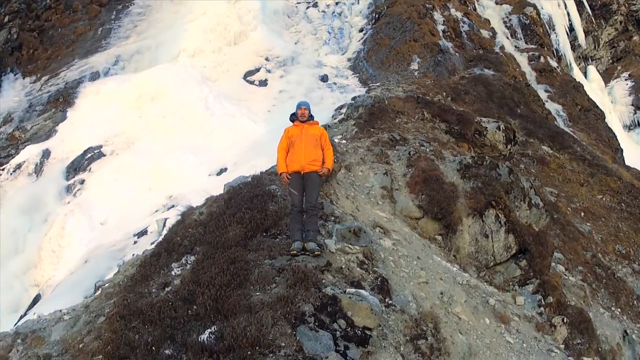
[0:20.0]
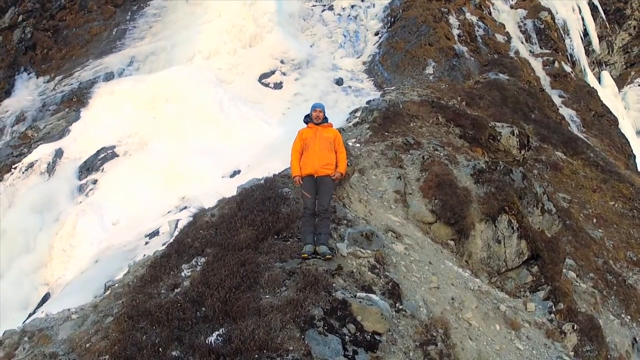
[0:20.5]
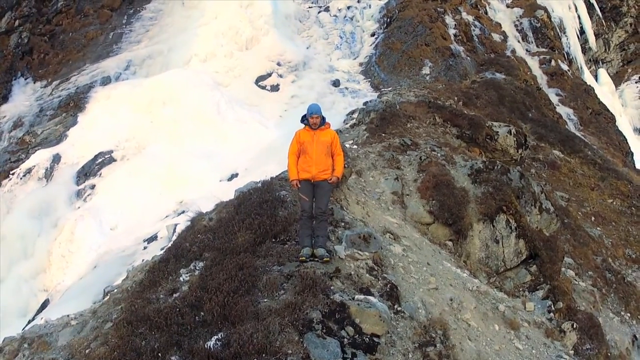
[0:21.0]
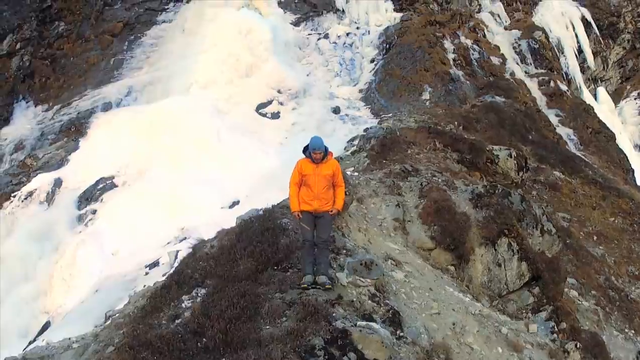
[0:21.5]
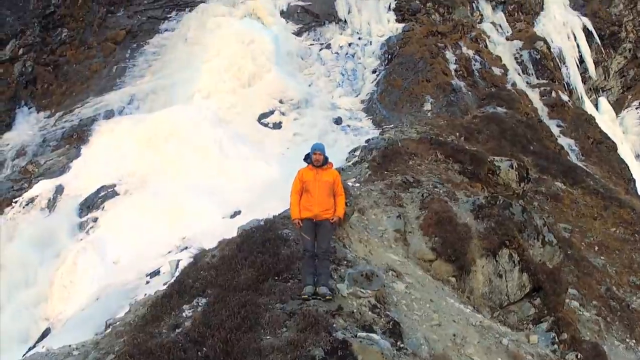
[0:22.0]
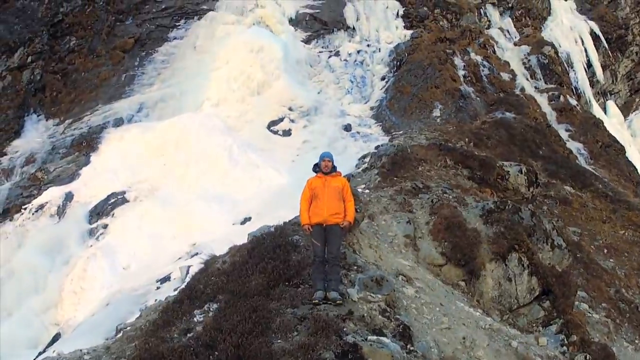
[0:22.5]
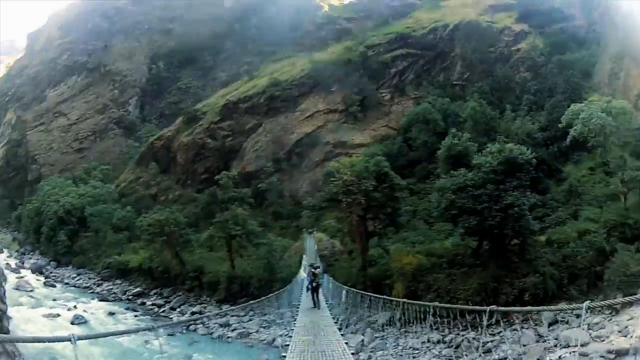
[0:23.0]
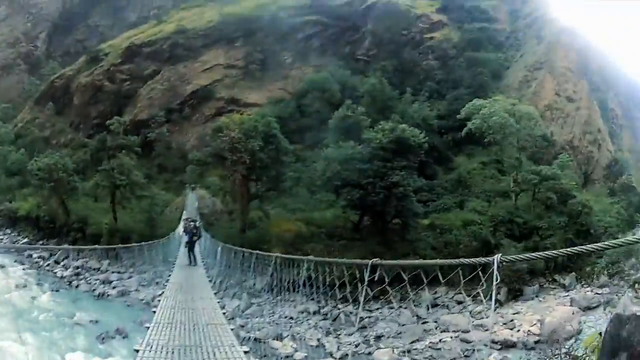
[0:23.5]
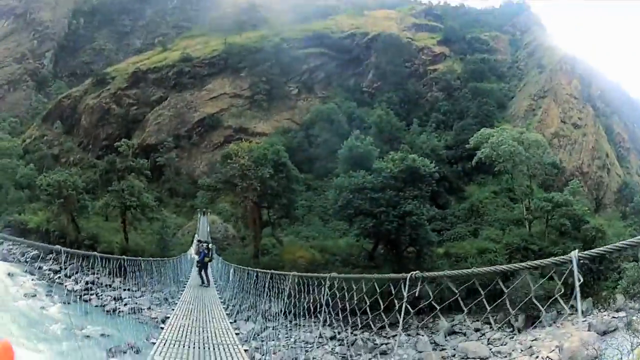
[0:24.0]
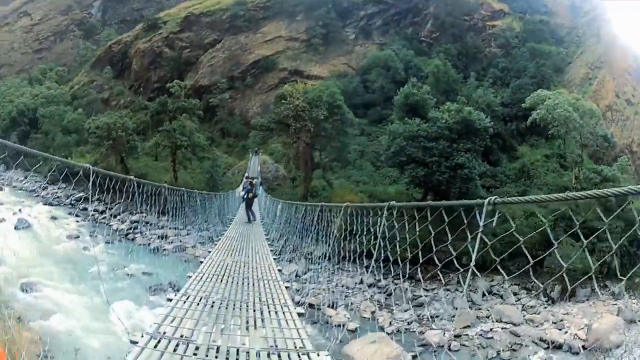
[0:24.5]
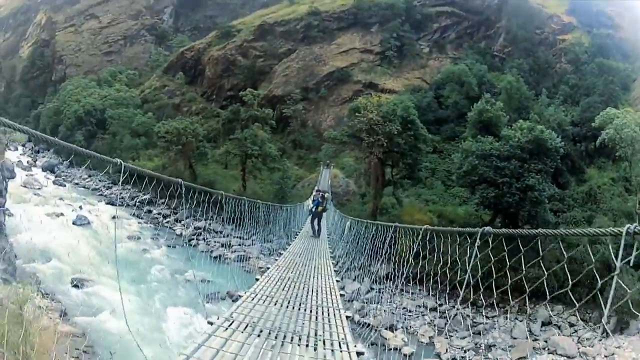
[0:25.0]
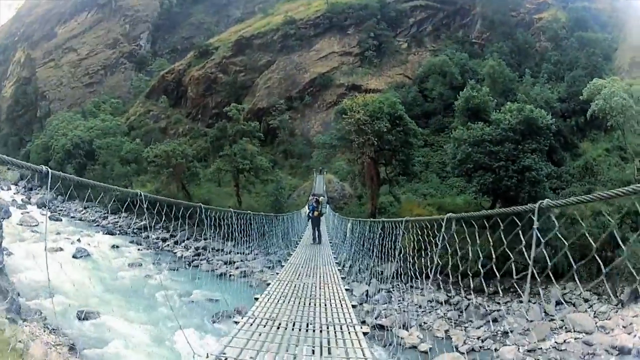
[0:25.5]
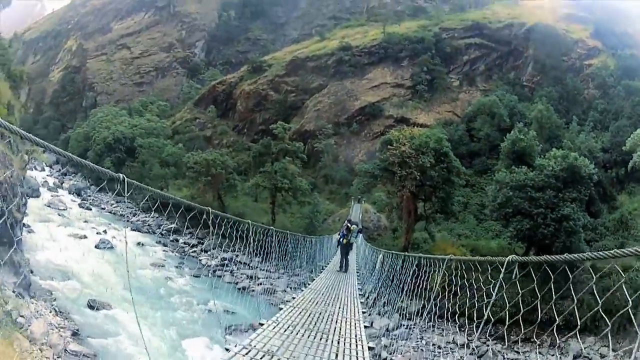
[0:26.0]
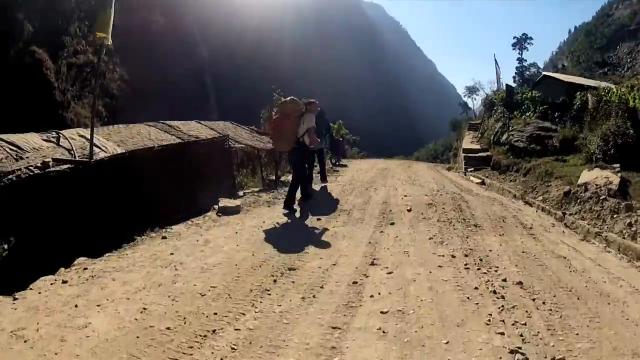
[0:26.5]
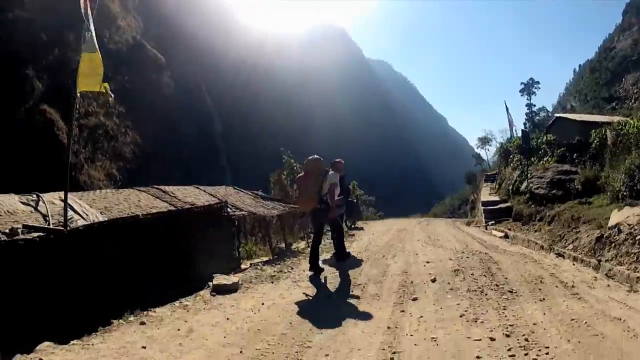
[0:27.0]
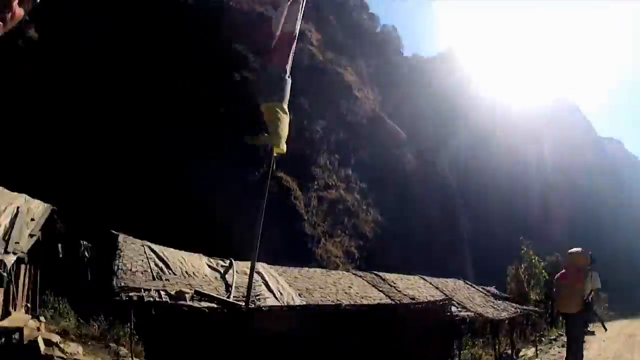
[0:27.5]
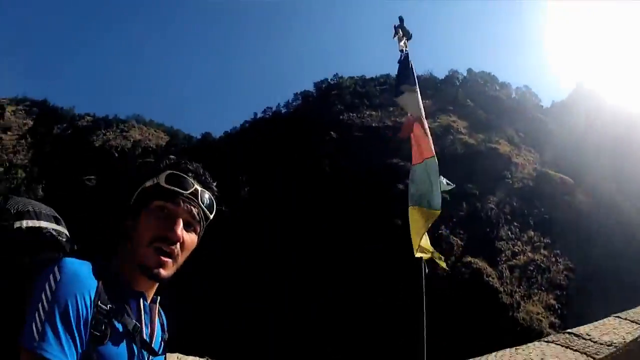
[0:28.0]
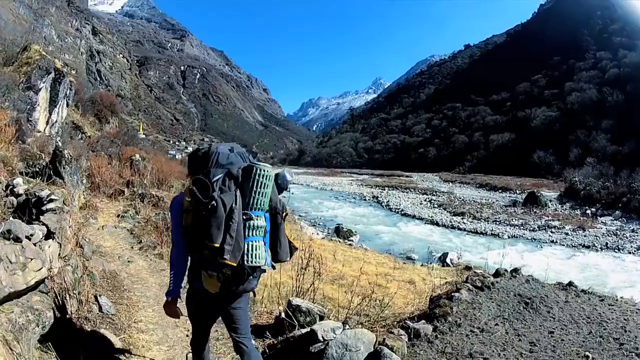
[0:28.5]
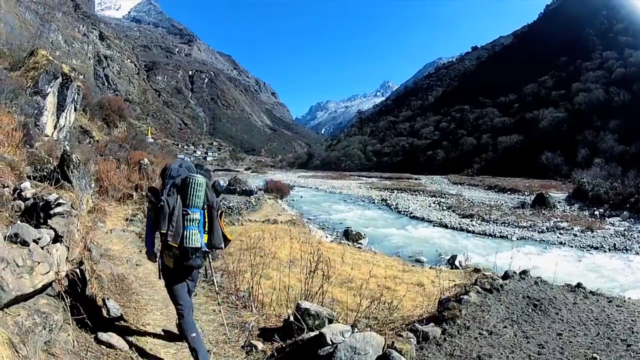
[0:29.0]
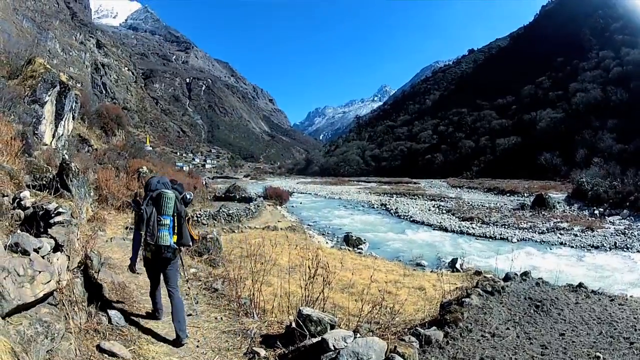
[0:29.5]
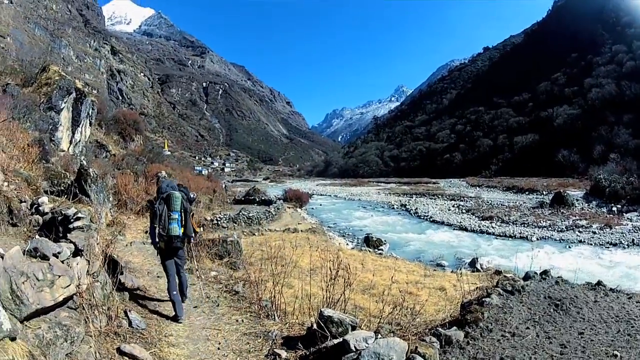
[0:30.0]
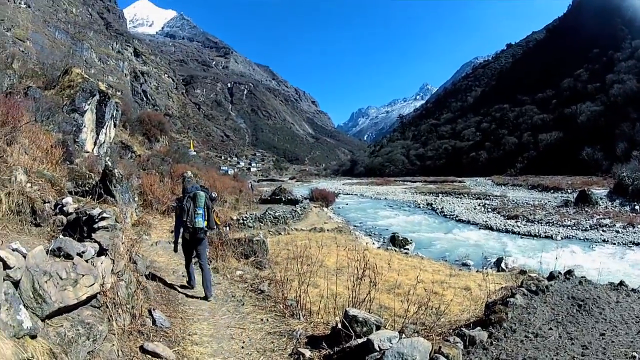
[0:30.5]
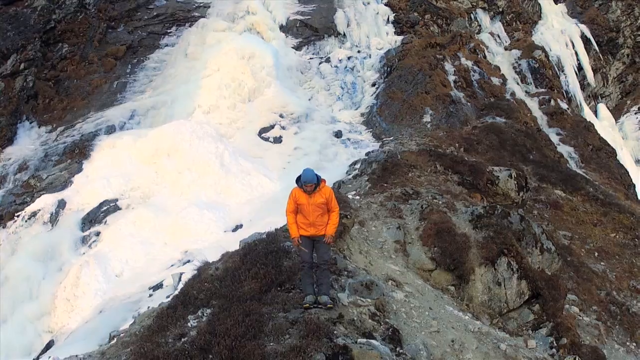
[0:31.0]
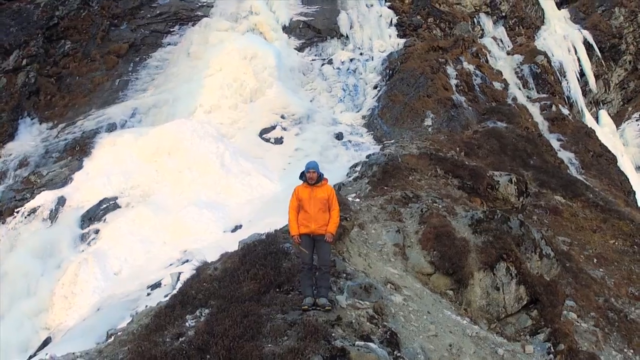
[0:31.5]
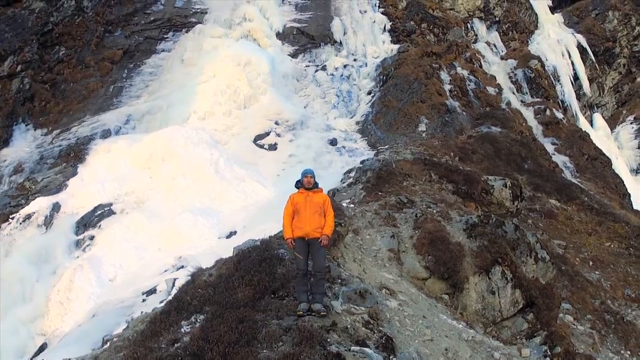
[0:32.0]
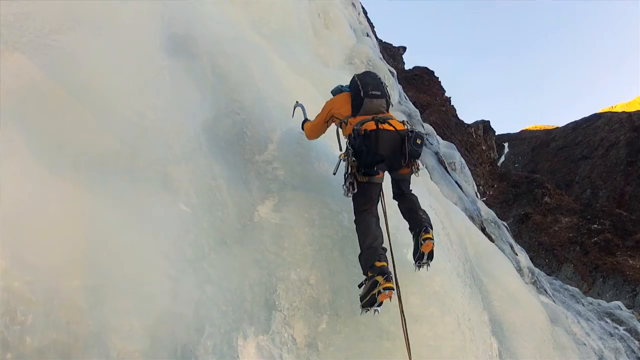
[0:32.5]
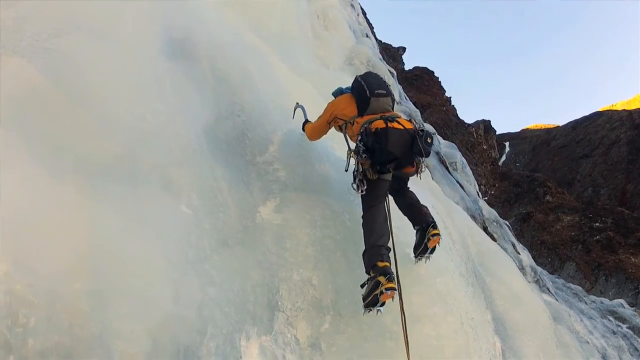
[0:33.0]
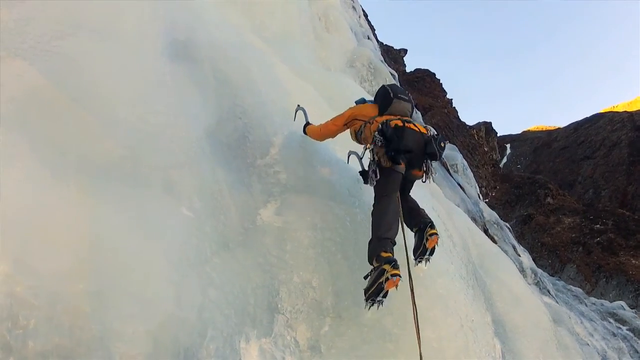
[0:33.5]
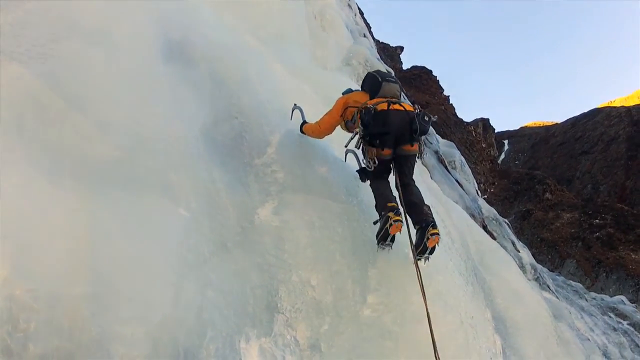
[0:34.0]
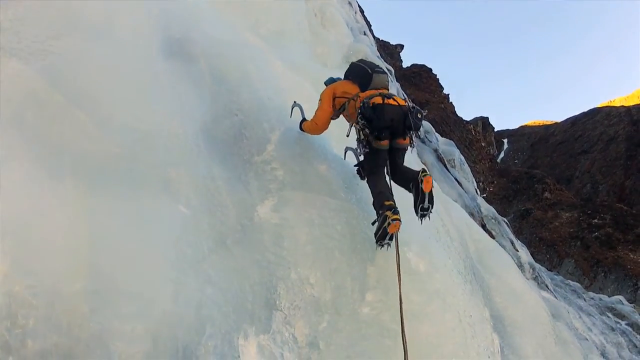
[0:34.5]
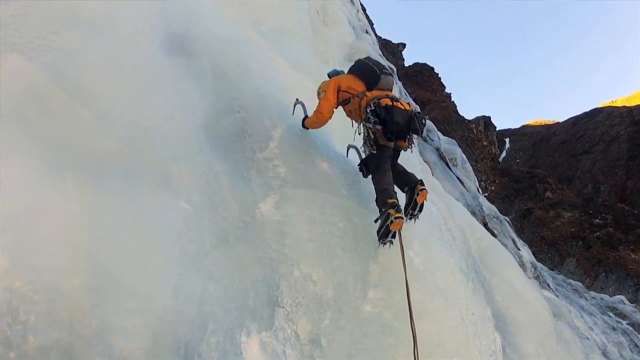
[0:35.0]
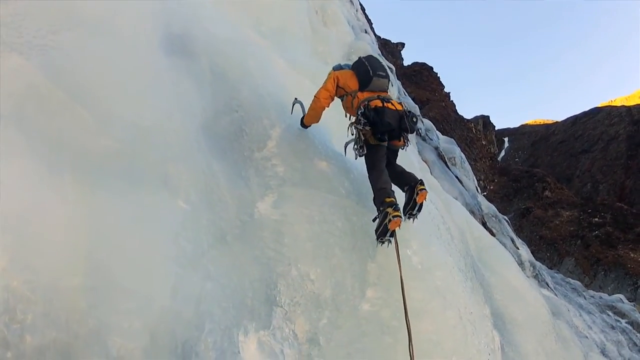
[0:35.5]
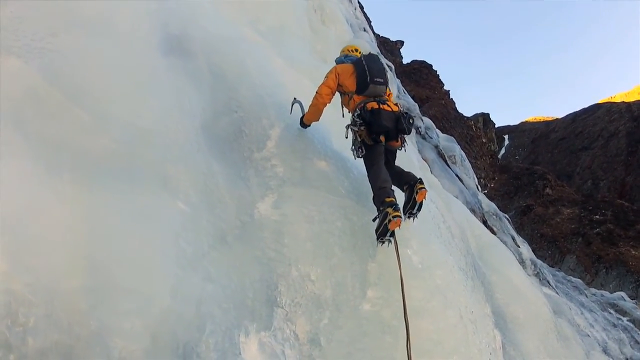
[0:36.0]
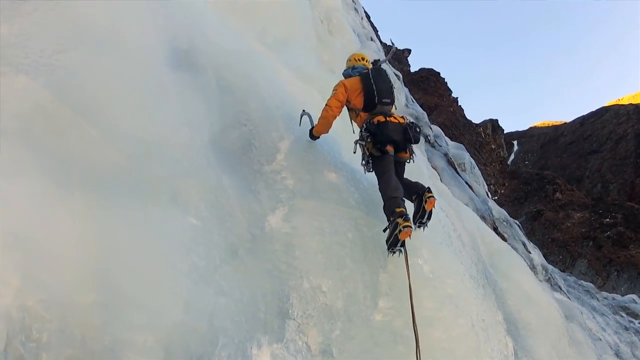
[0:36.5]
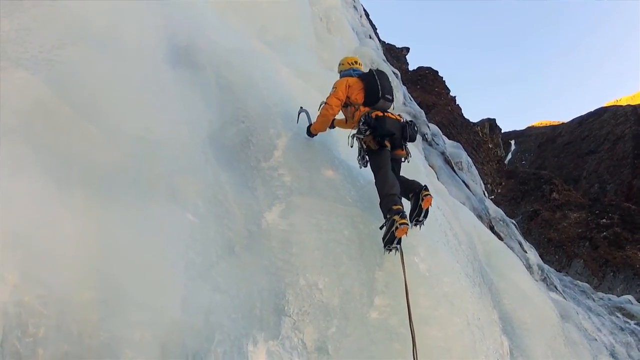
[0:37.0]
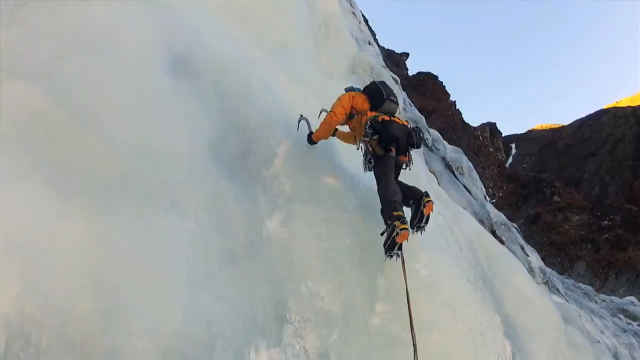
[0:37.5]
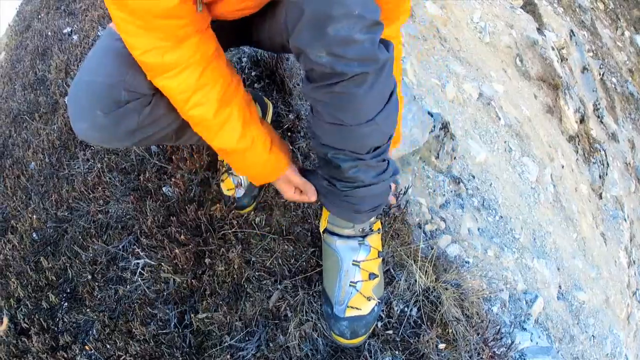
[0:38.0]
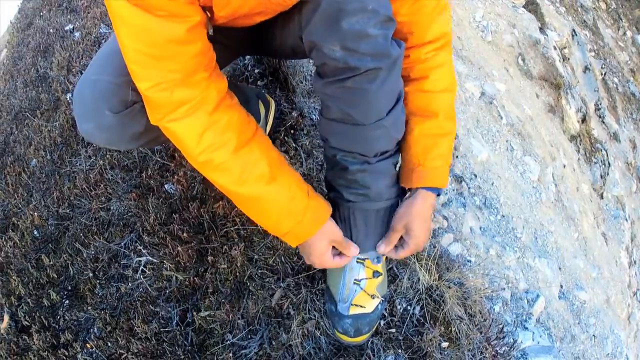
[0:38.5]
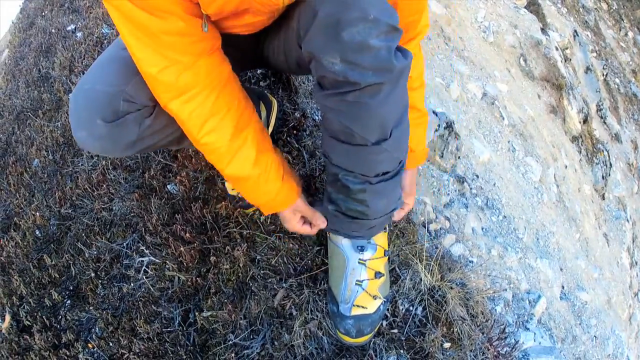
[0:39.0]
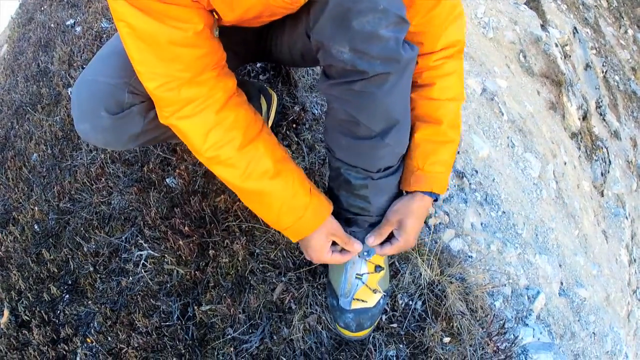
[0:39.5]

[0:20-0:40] The man in orange and gray is standing up on some rocks, somewhere kind of by a mountain, with what is possibly snow behind him. The people then walk on something like a rope bridge. The camera operator films while walking, so the shot moves all around; it looks like they are walking on a dirt road. They then walk beside a small river, with a walking stick, and mountains are visible up ahead of them. Snow, rocks, people climbing and people adjusting their shoes are shown; they appear to be getting ready to climb a mountain.